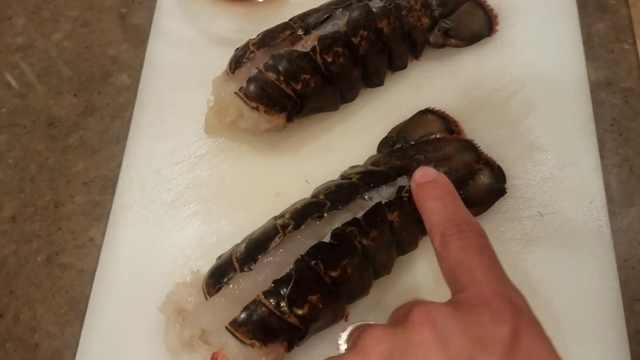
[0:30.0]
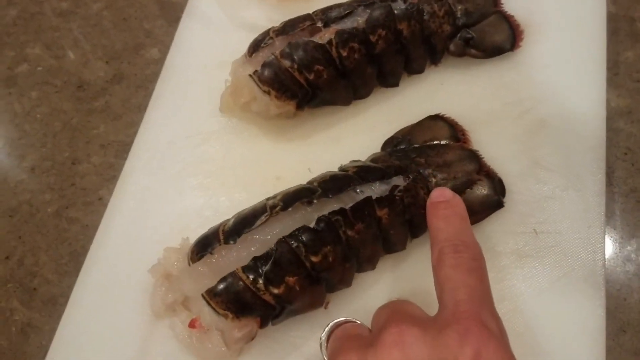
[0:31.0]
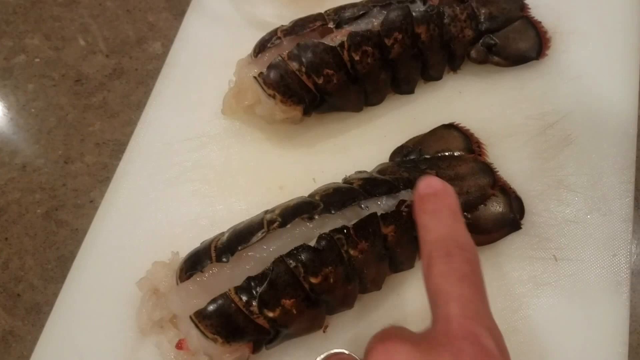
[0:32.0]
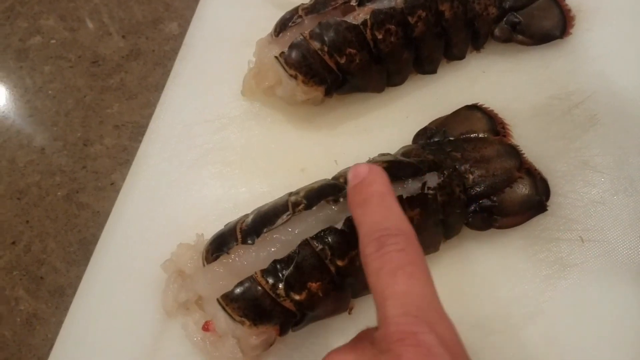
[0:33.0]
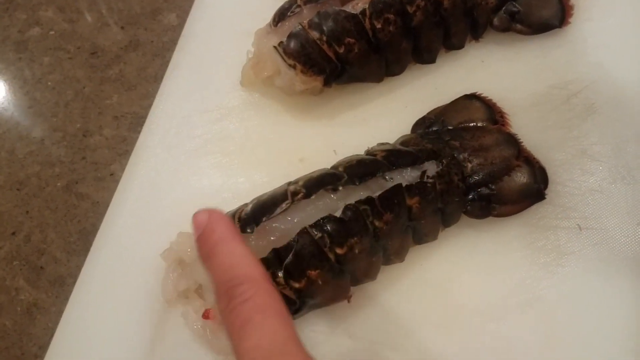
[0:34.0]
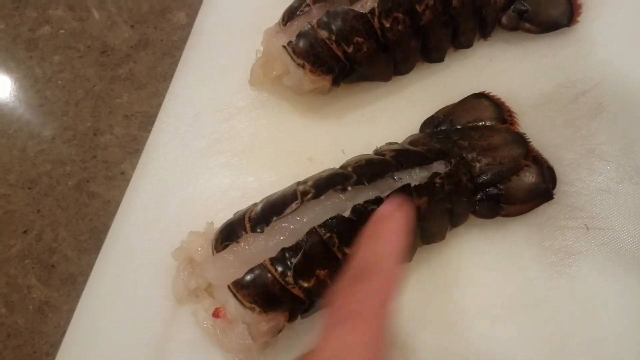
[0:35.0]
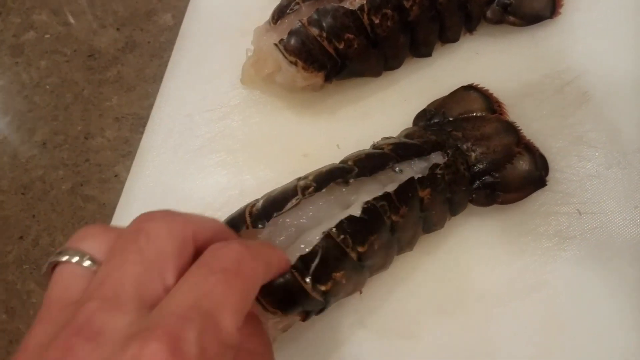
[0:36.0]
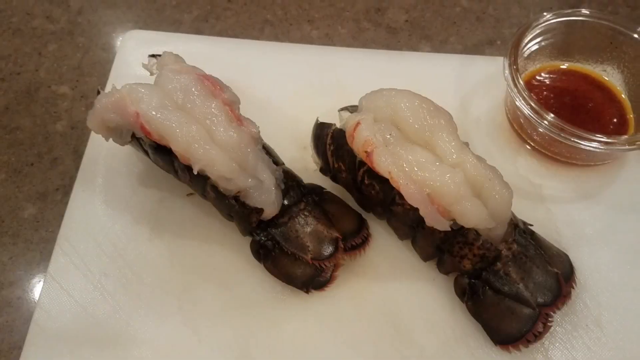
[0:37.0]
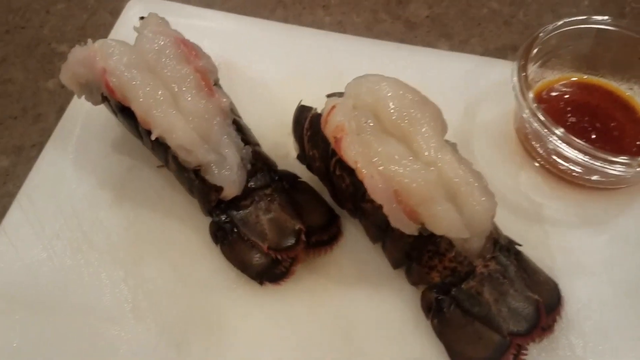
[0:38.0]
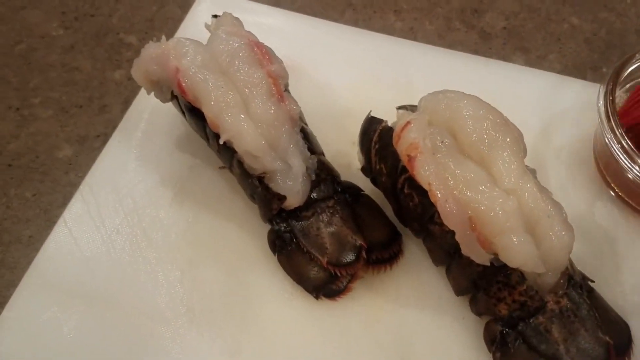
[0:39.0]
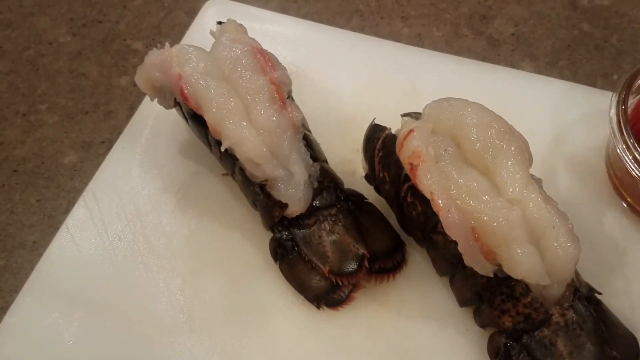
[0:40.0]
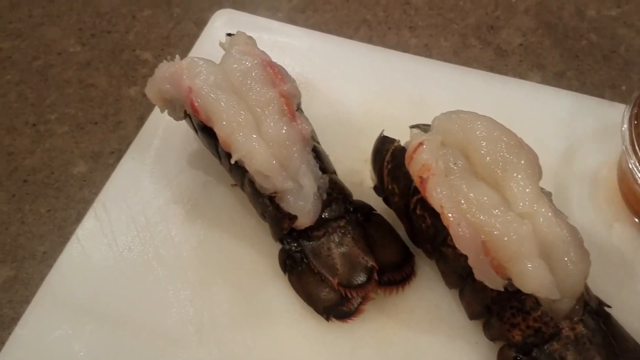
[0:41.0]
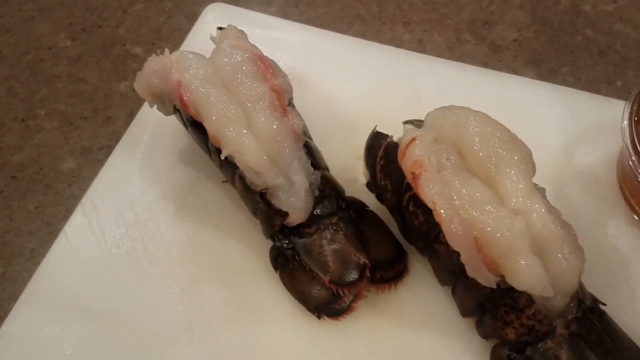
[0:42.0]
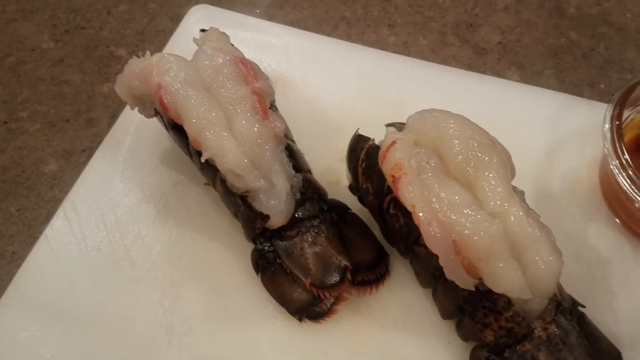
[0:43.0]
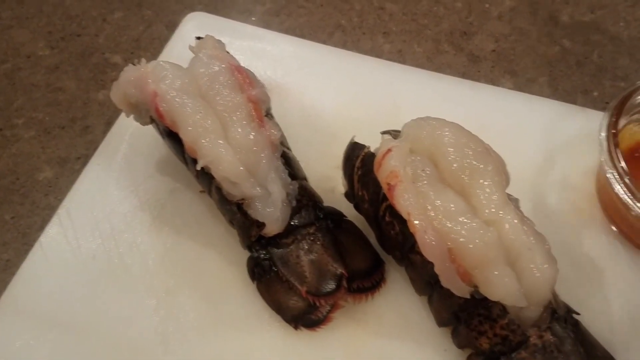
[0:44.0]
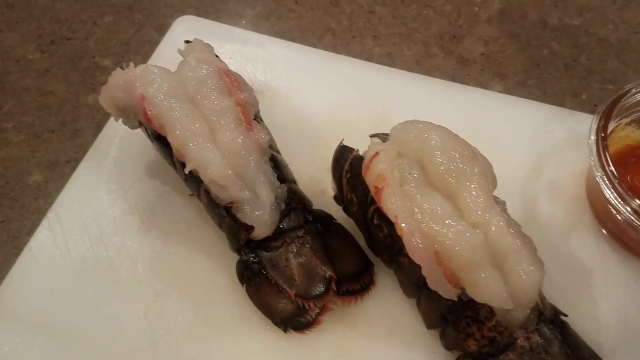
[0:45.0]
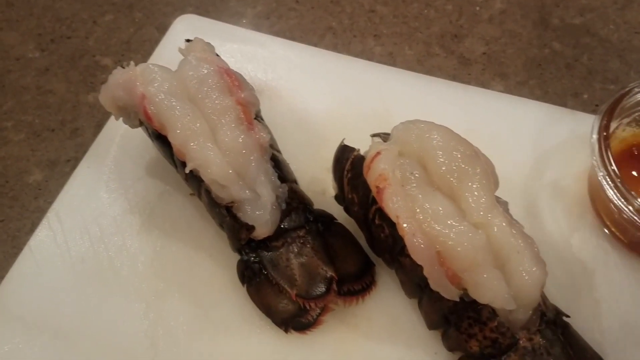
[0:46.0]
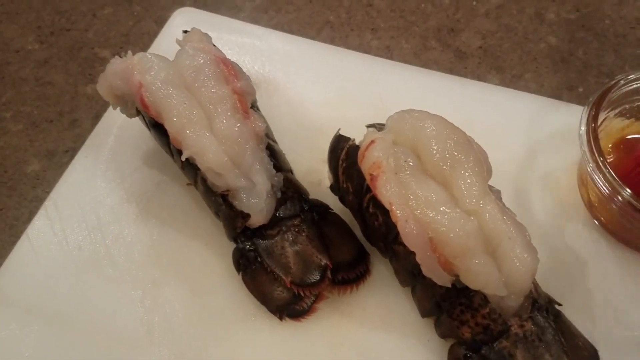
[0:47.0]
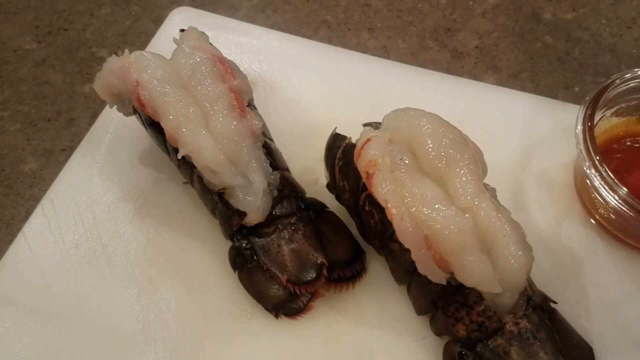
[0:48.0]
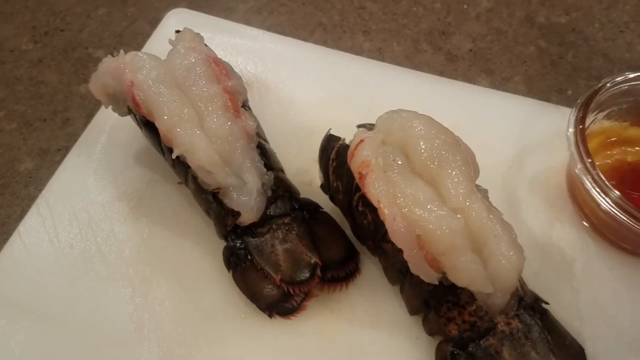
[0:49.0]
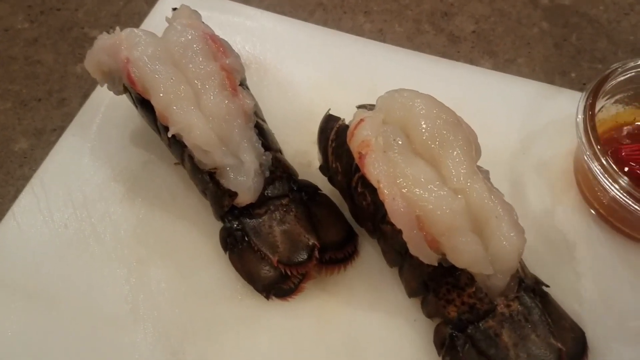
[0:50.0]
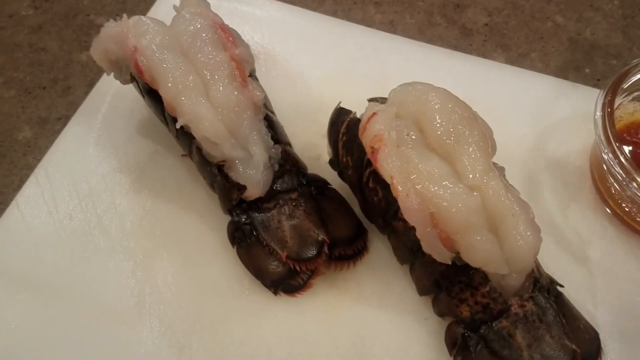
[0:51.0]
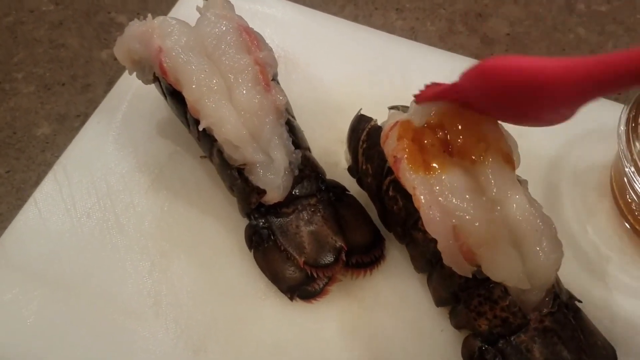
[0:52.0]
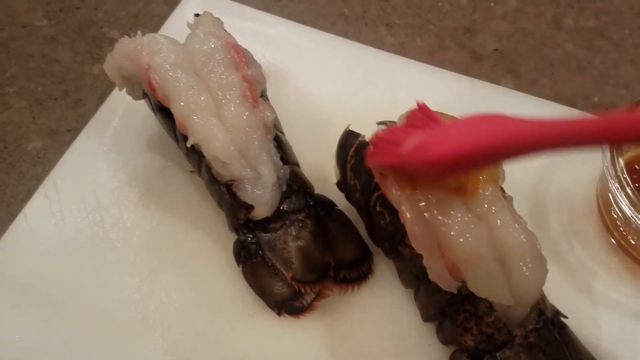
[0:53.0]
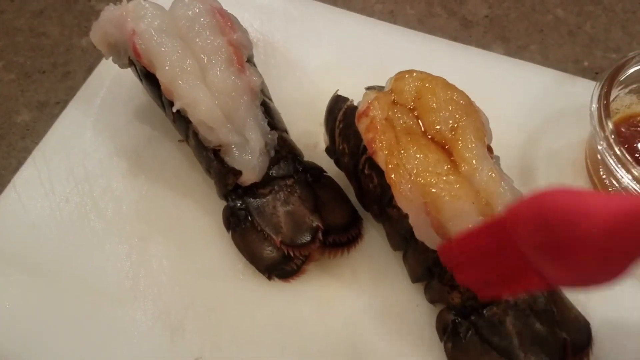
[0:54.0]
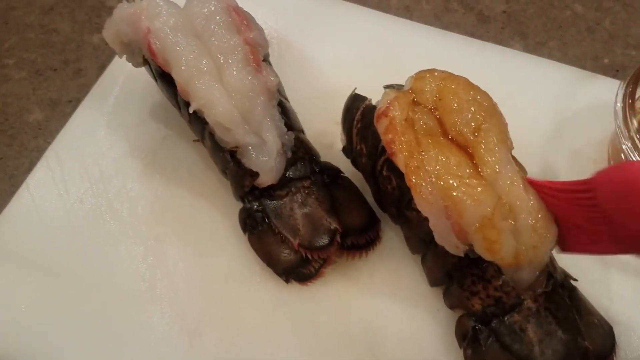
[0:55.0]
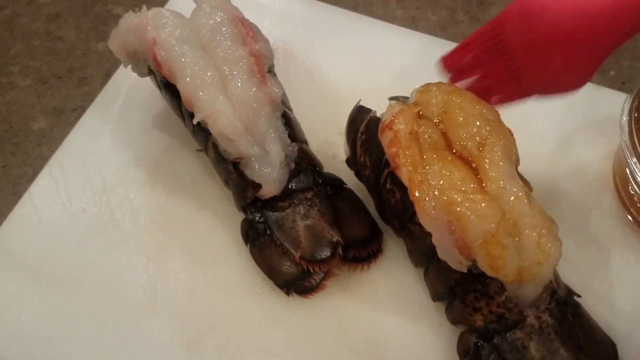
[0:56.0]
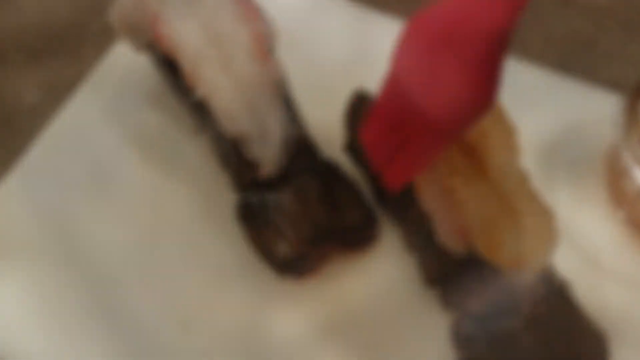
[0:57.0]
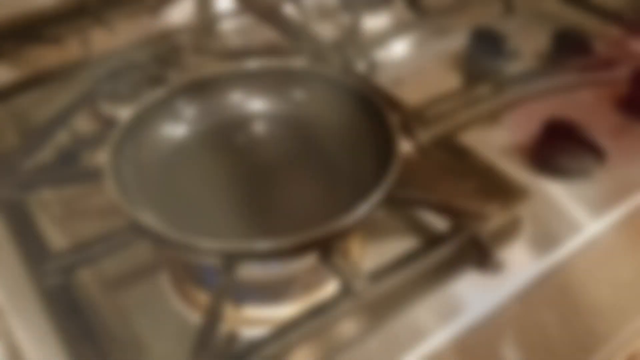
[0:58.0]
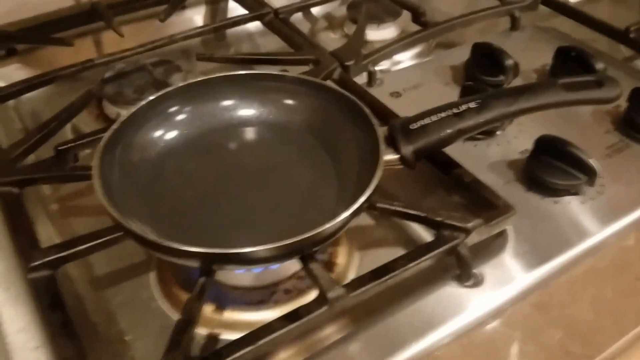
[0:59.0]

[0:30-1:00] Two black lobster tails are open, exposing the white meat inside. They are set on a square plate, and next to them is a small clear bowl with a red sauce in it. A hand points at one of the lobster tails as the camera zooms into it and changes angle. The person keeps opening the tails, exposing the meat inside. The camera changes to a different angle: the white part of the tails is now very open and the black part is almost at the bottom. The camera zooms into the white meat. The plate can be seen shaking slightly, and the sauce in the bowl shakes too. The cook dips a red cooking brush into the bowl of sauce and bastes the white parts of the meat with it. The camera then changes to a gas stove flame, and on top of it is a black saucepan with a handle. The camera zooms into it.